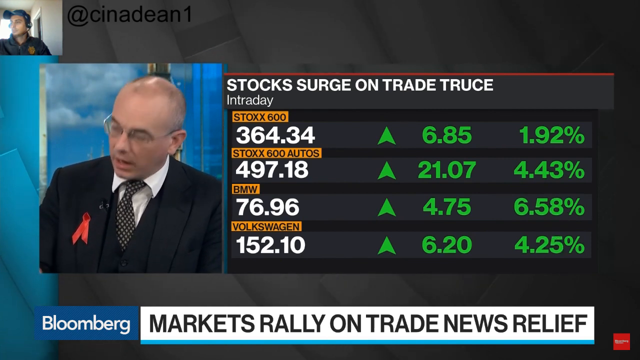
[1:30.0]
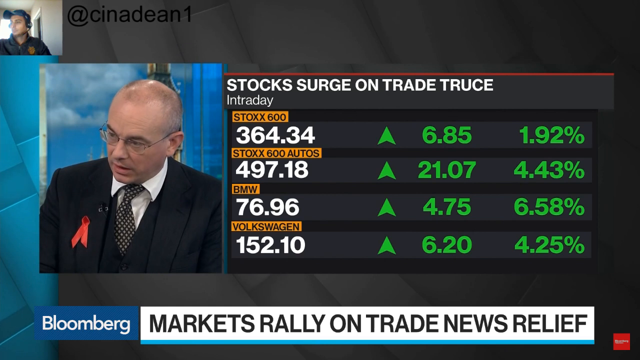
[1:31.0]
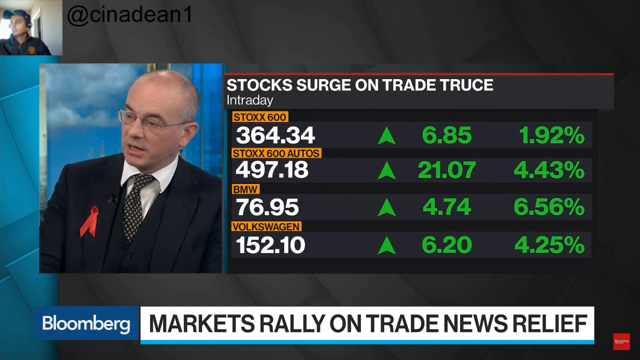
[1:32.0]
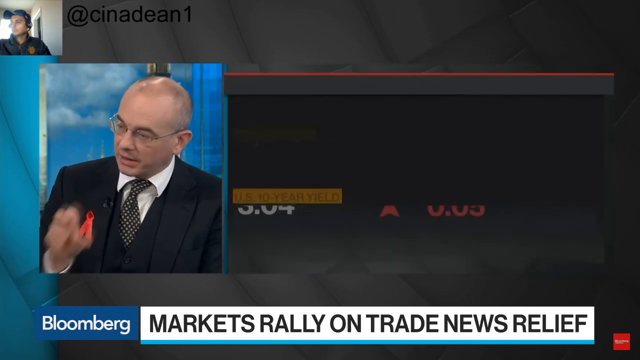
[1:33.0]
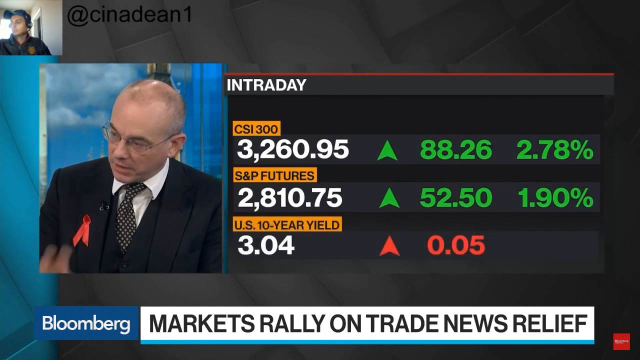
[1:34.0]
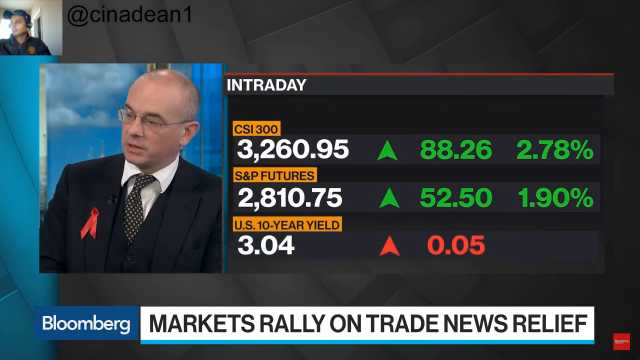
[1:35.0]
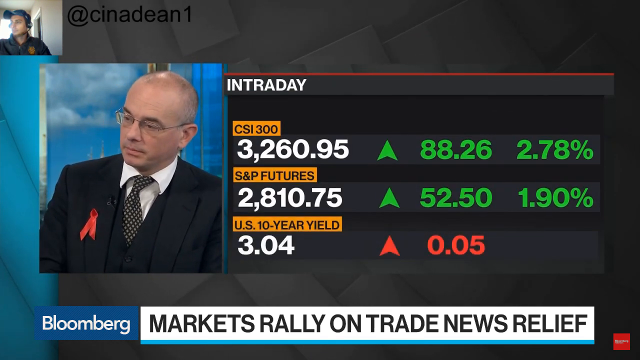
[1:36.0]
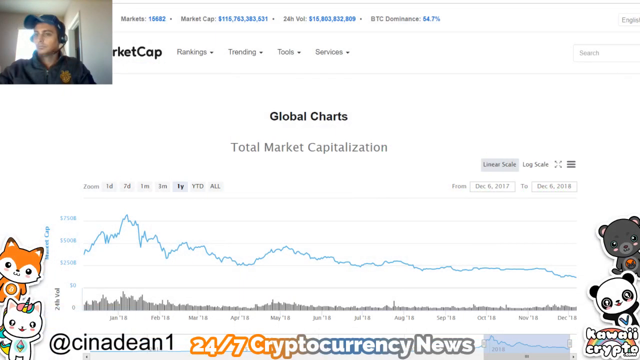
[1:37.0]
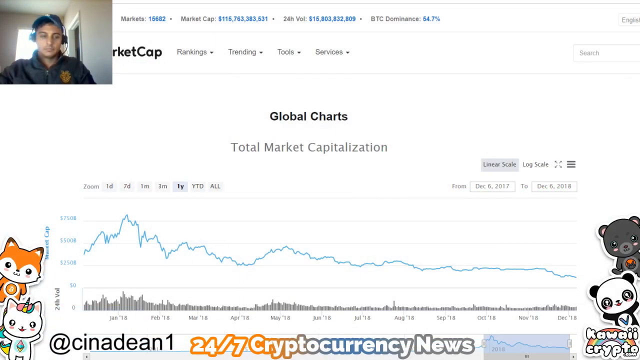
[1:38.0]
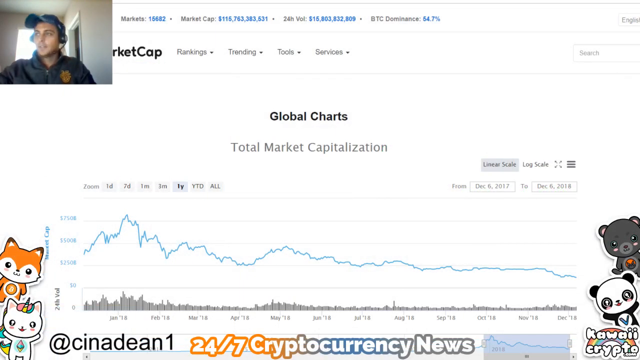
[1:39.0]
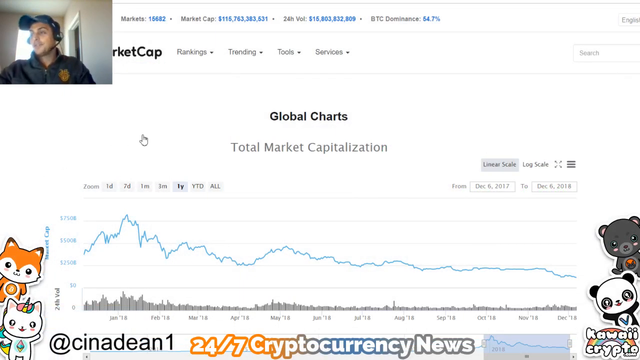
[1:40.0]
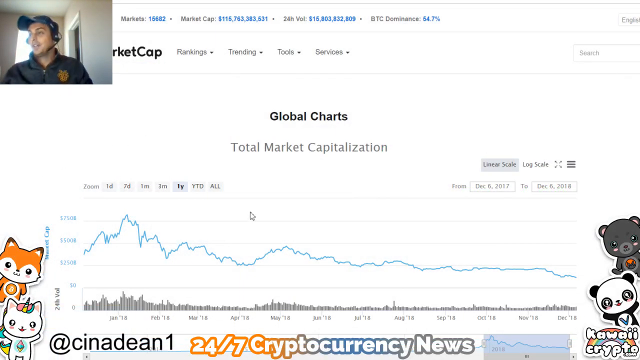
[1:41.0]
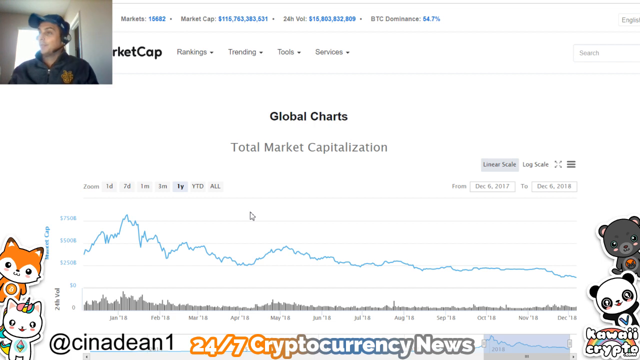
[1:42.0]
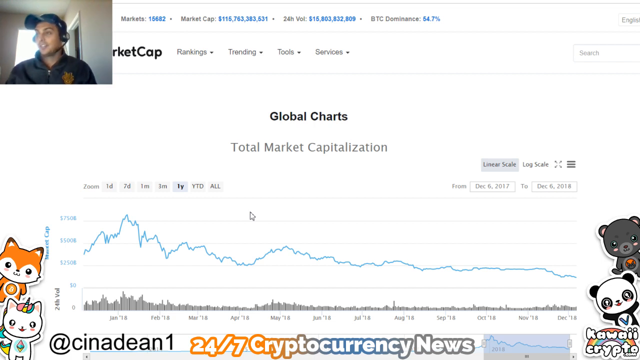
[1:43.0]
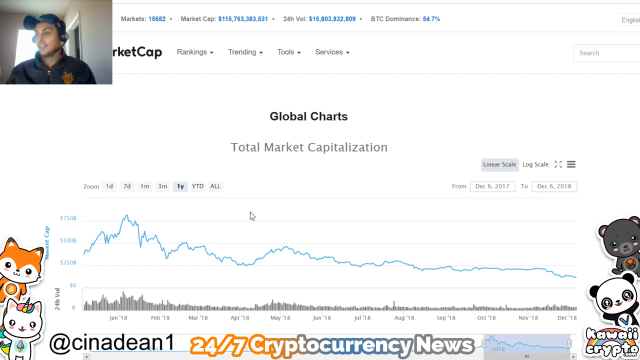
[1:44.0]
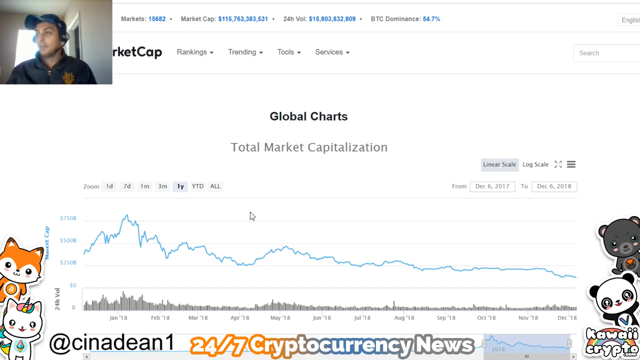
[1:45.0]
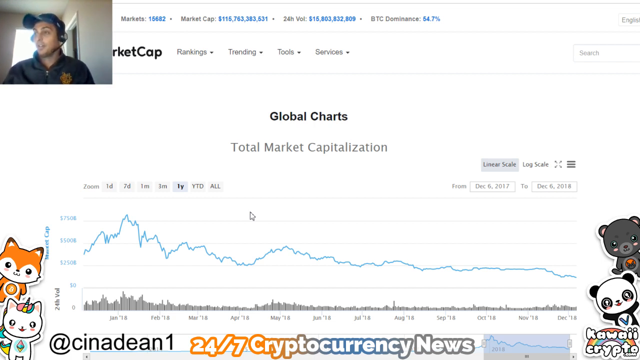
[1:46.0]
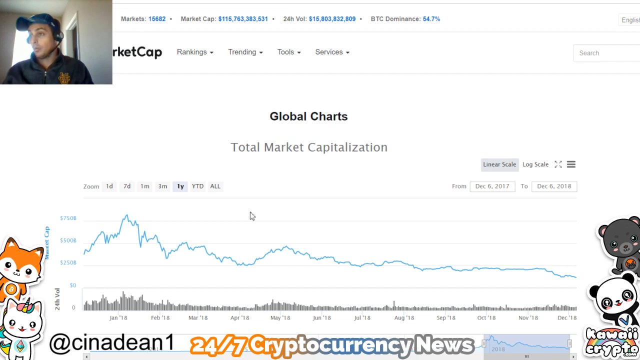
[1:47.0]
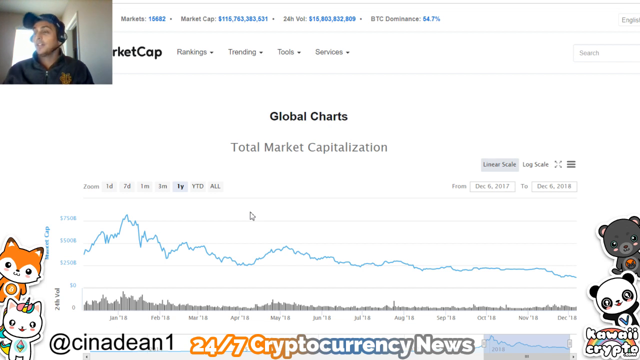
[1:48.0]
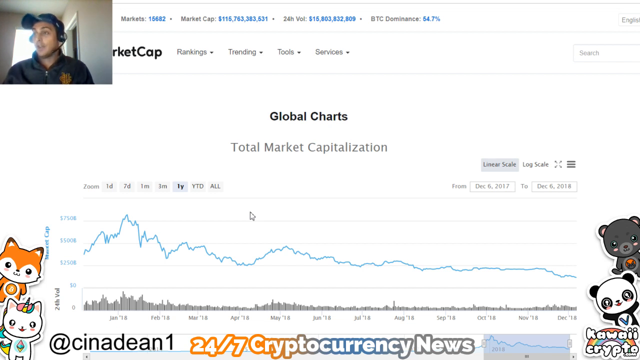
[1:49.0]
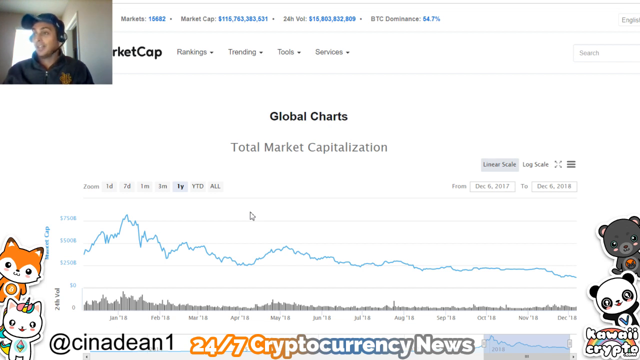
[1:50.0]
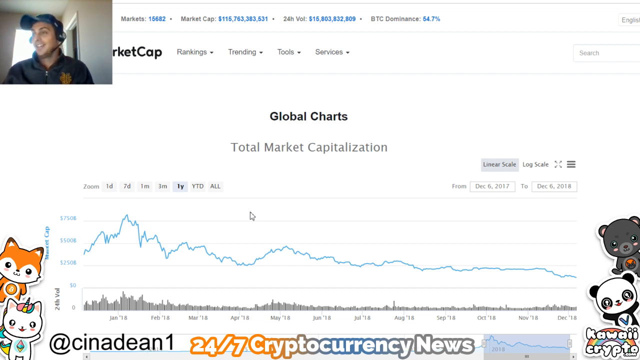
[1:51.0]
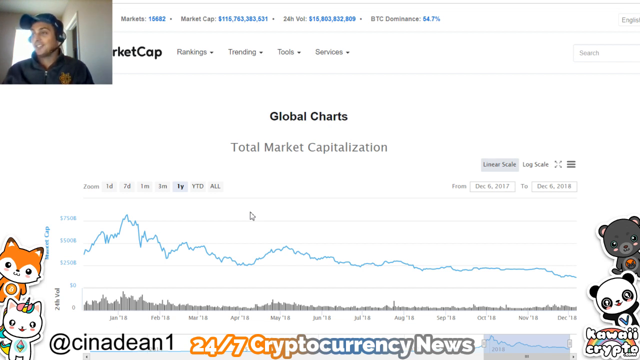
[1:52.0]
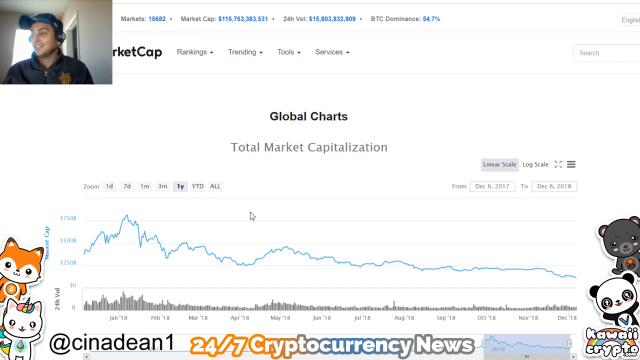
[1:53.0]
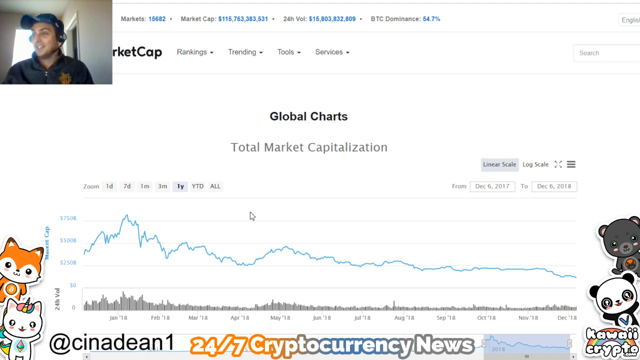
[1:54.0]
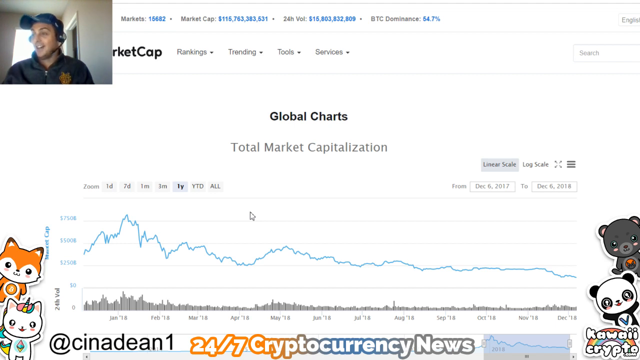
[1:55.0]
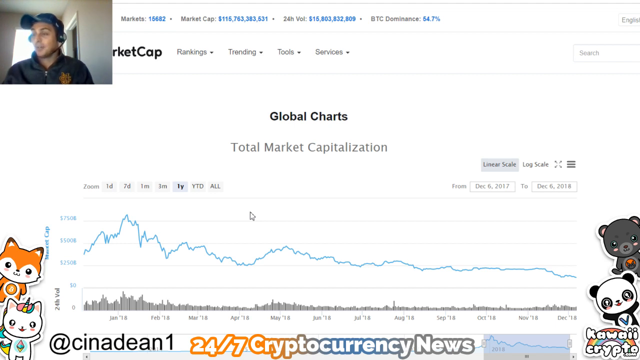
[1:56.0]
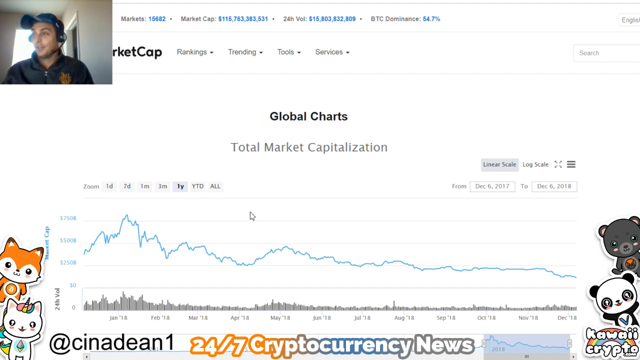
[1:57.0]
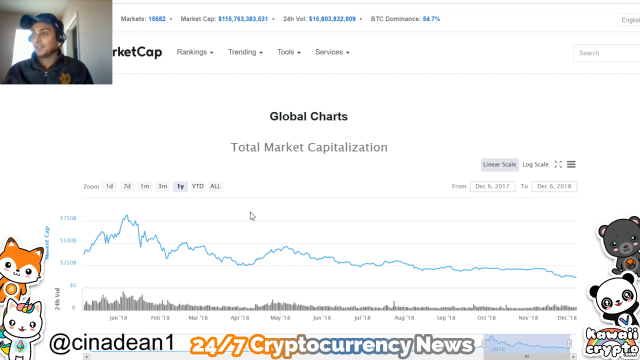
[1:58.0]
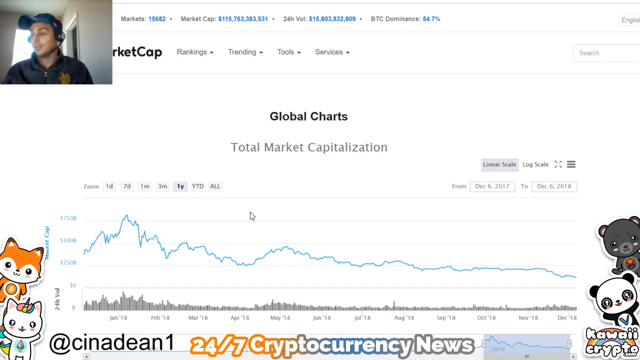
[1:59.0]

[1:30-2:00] The same setup continues: the man in a dark jacket and baseball cap, Cinedine, is in a square in the top left corner, and Paul Donovan is in his box toward the left side, talking. On the right, a graphic mentioning a "trade truce" and "Intraday" lists Stocks 600, Stocks 600 Autos, BMW and Volkswagen at 364.24, 497.18, 76.96 and 152.1 points respectively, up 6.85, 21.07, 4.75 and 6.20, or 1.92%, 4.43%, 6.58% and 4.25%. The bottom reads "Bloomberg" and "markets rally on trade news relief". The graphic then shows the CSI 300, S&P futures and S&P 500, all up, in most cases significantly, and the U.S. 10-year yield, up only 0.05. Then a total market capitalization graph appears, and the man in the upper left corner starts talking about it, seemingly taking over.